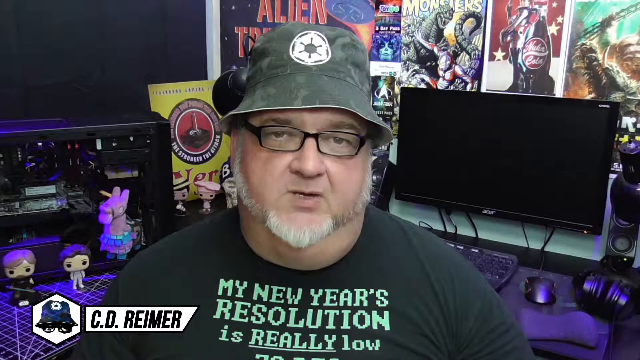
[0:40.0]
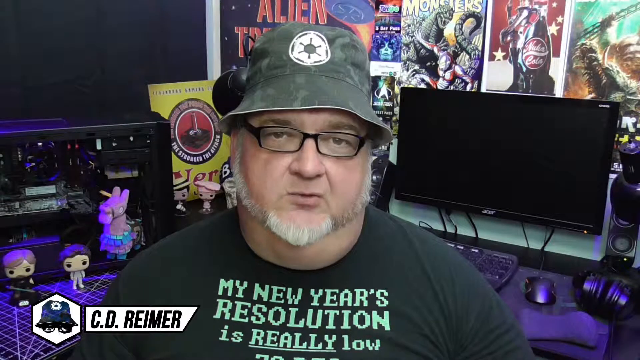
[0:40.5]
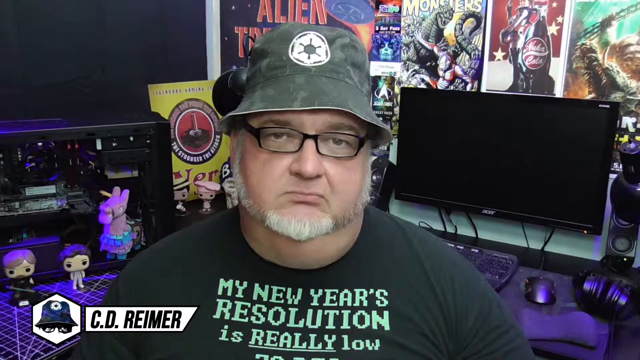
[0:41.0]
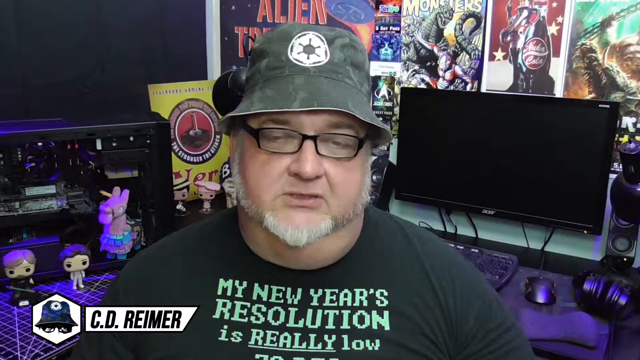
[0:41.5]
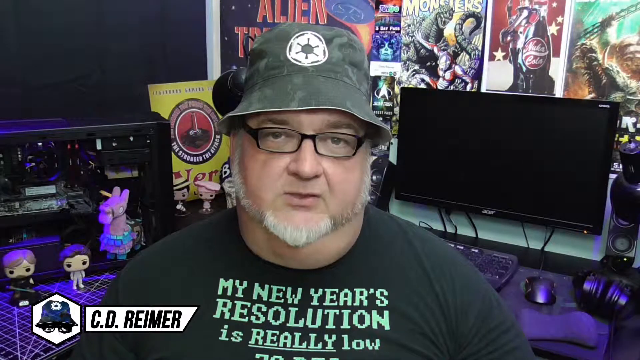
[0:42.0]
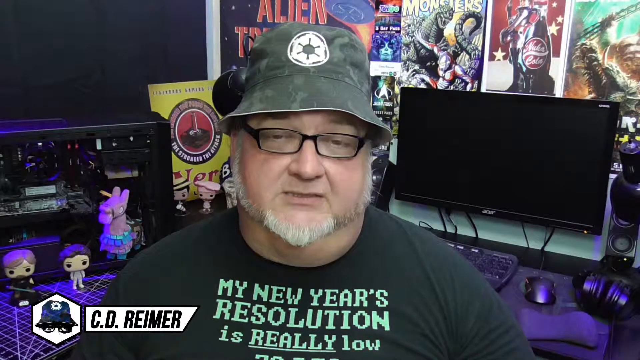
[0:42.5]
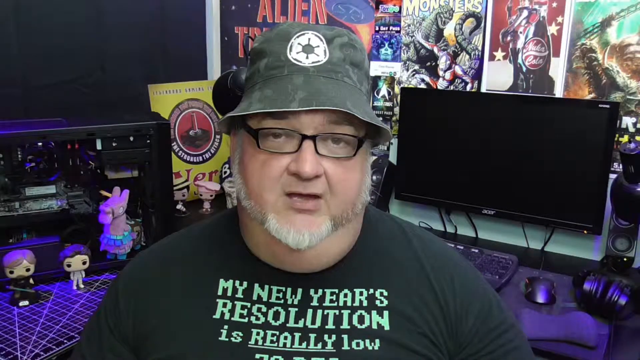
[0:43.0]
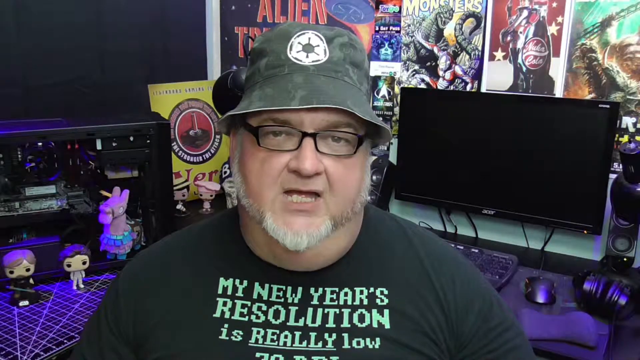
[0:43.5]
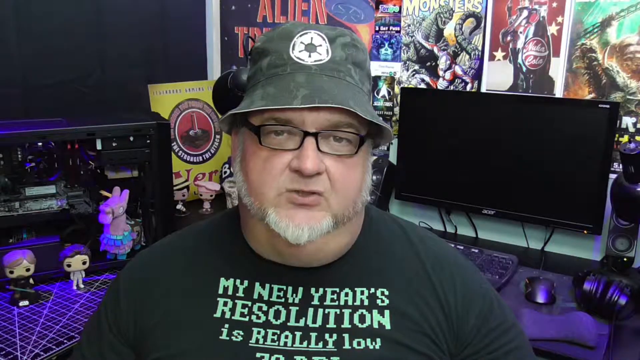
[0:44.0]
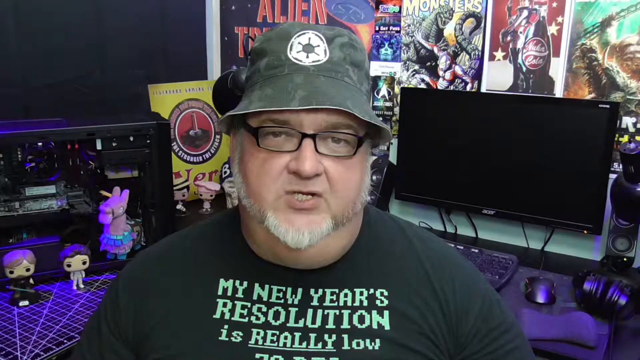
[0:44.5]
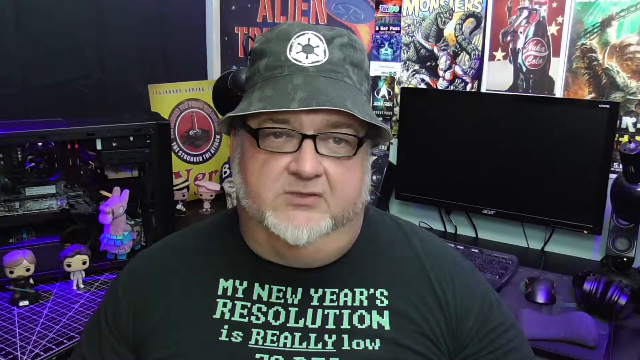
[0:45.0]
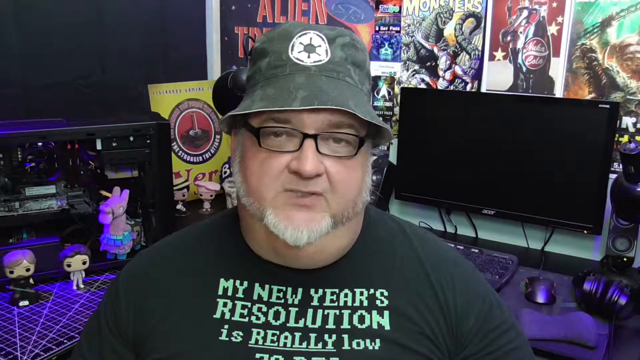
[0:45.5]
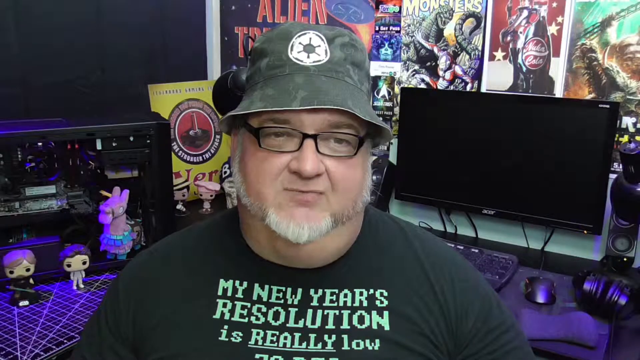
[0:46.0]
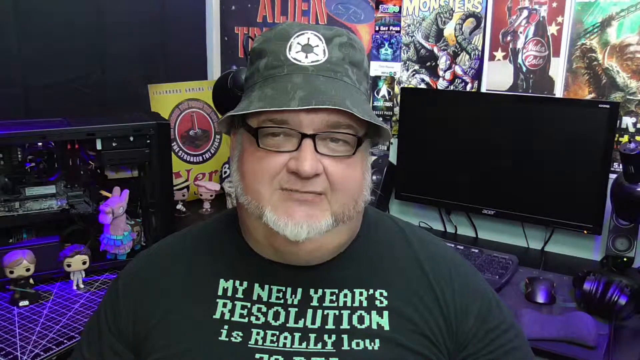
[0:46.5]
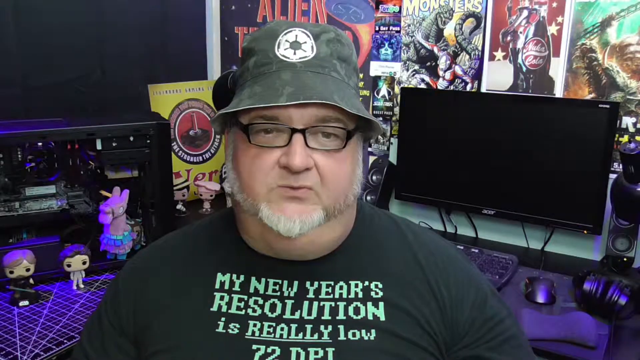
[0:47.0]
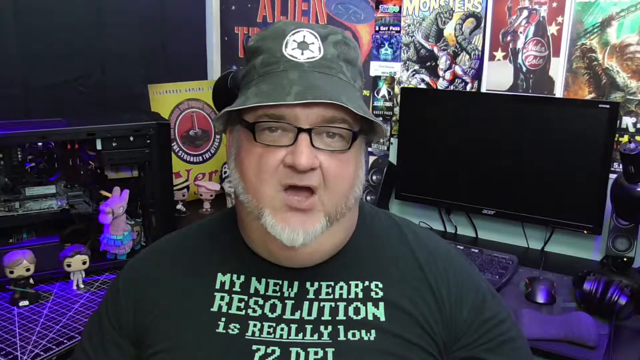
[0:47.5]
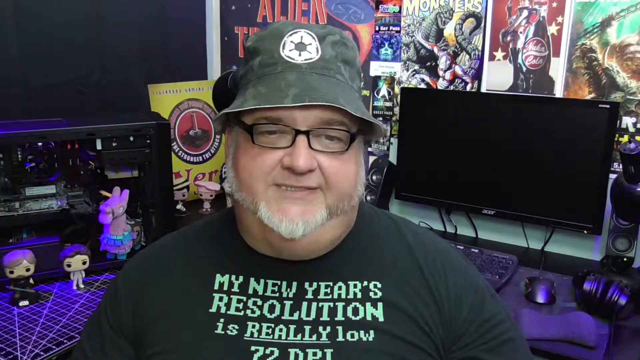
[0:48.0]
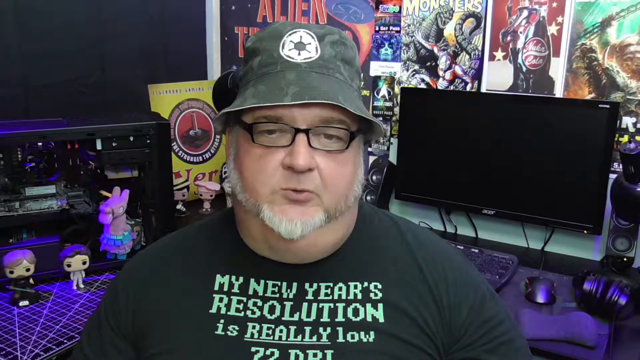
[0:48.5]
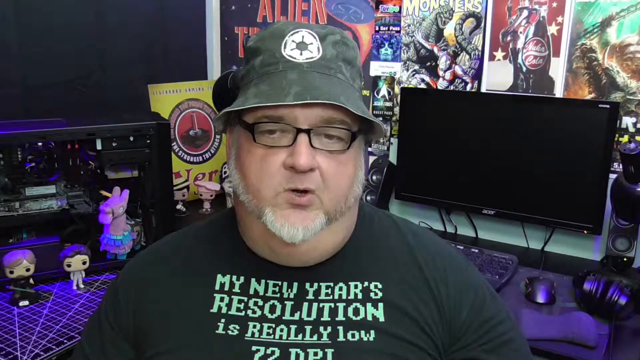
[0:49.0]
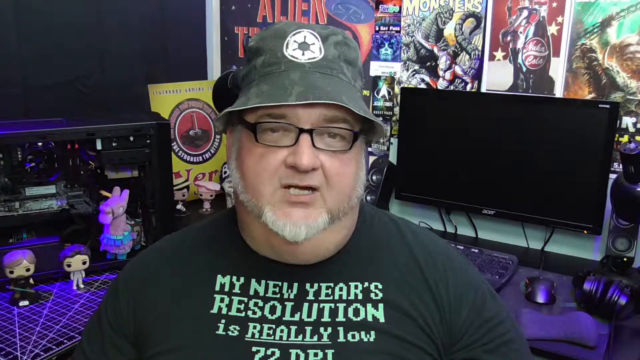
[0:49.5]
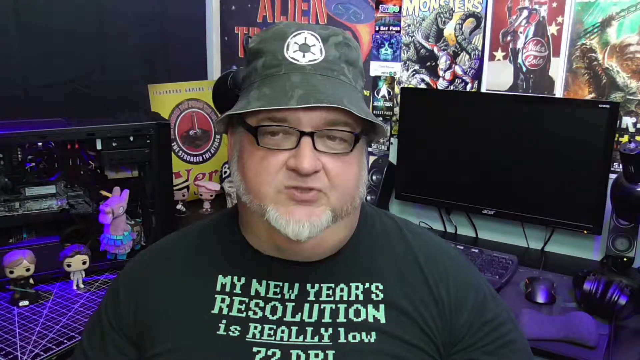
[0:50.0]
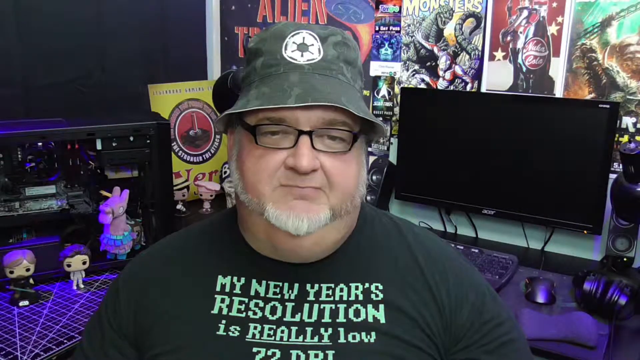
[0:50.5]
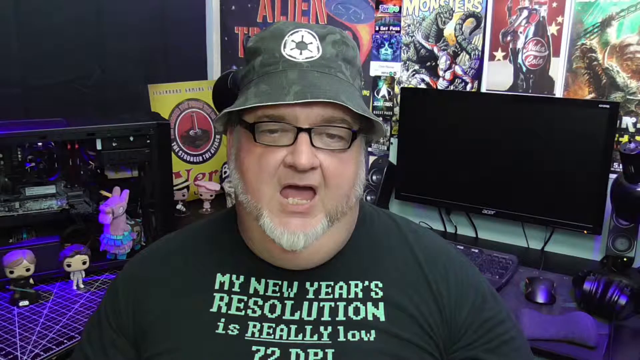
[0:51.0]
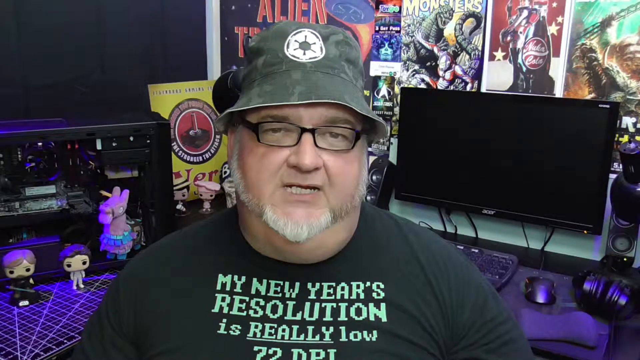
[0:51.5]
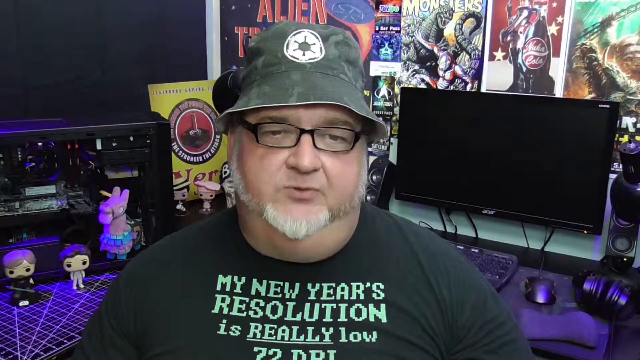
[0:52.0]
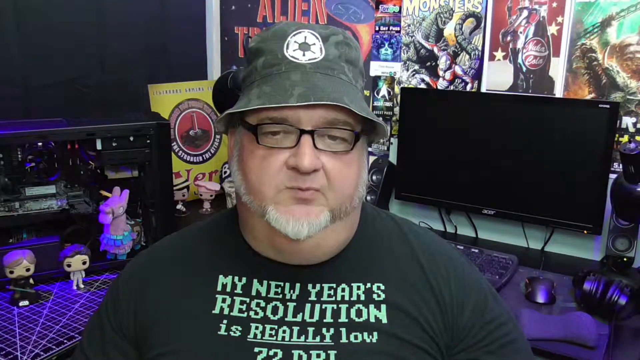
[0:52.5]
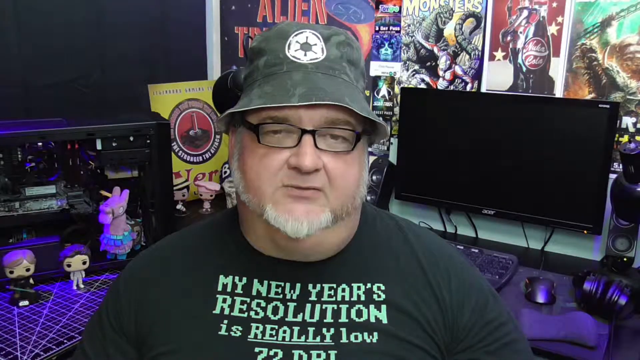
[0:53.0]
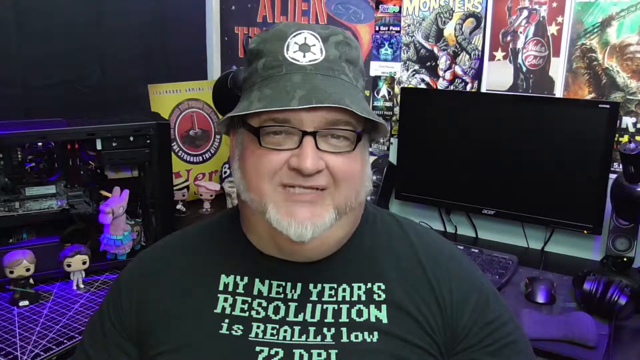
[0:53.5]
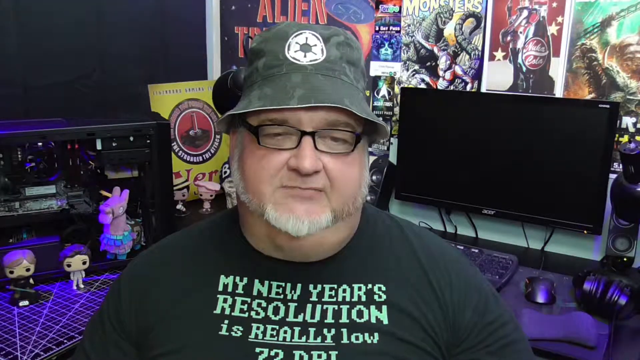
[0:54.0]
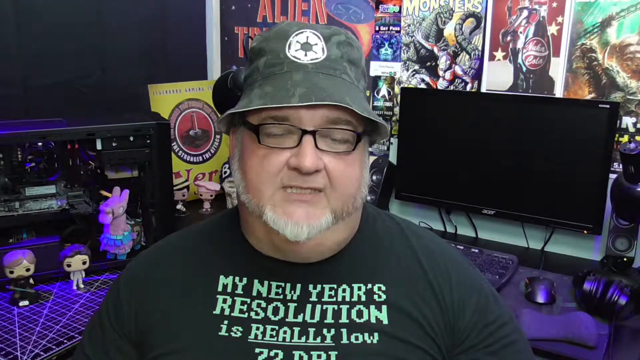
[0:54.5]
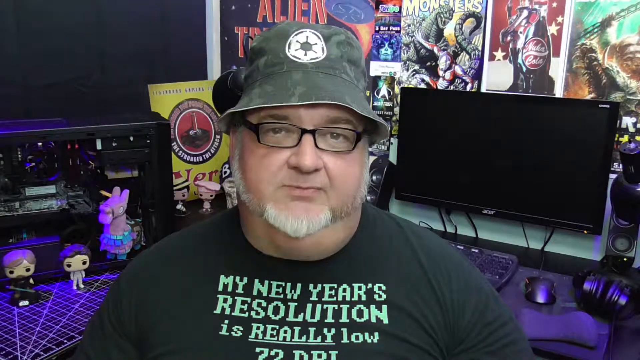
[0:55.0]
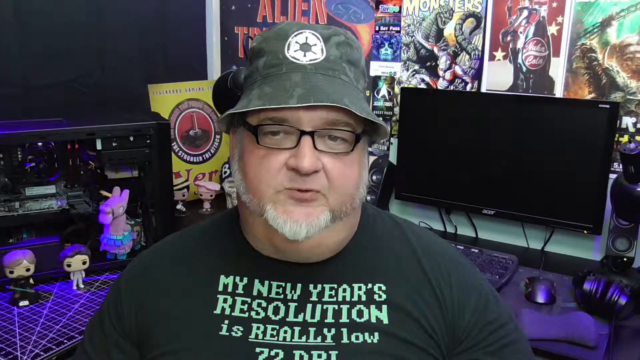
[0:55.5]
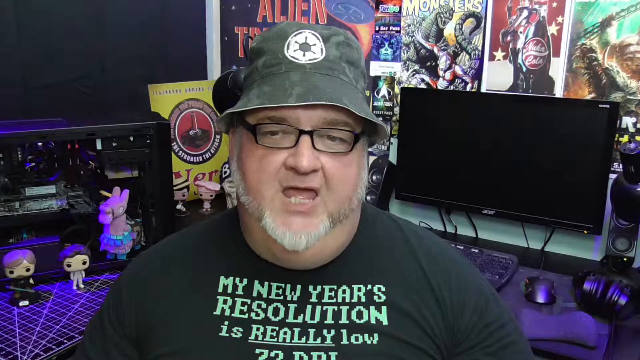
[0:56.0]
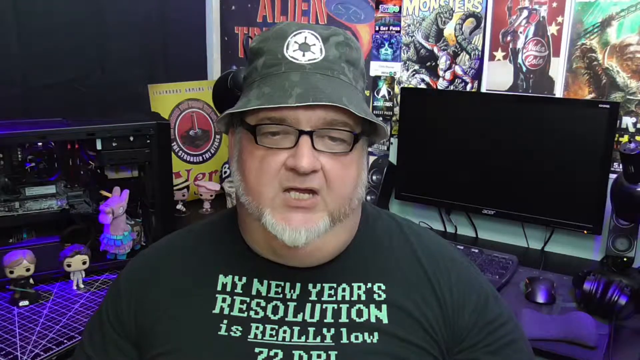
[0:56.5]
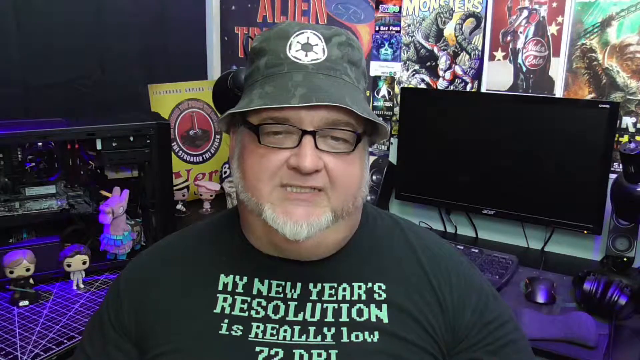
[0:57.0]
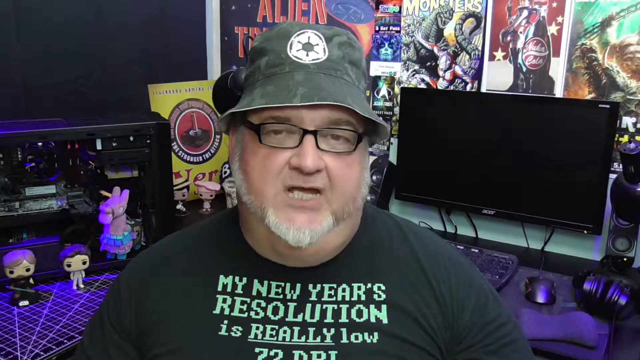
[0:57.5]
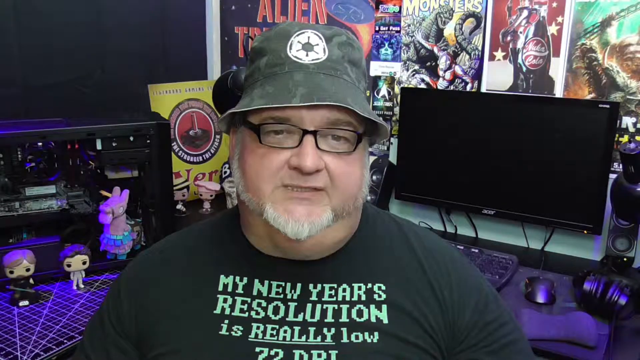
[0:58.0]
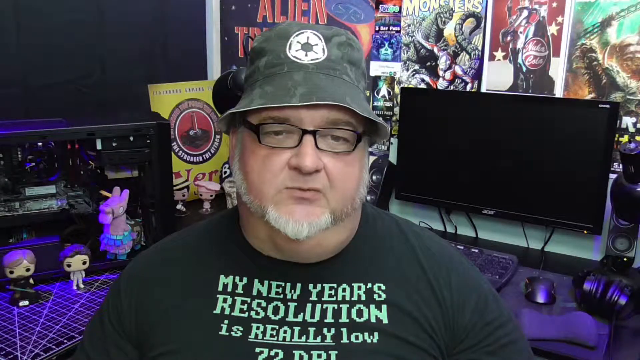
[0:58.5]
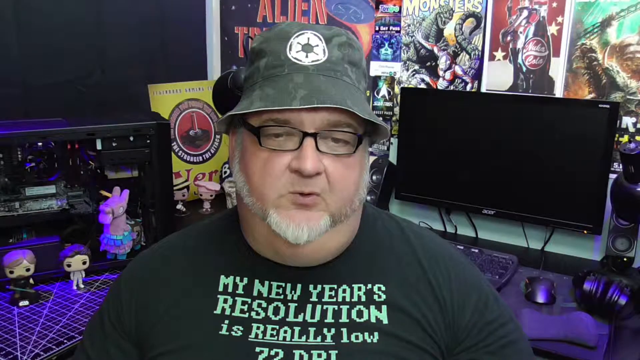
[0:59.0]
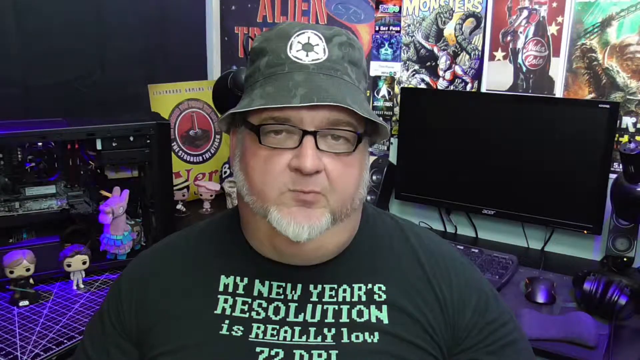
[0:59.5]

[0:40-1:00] The man continues speaking to the camera with some eyebrow movement. His eyes seem to wander in a way that looks like reading, giving the impression that he is talking from a script. Behind him are two typical gamer speakers, one to the left and one to the right of his monitor. A headset is lying on the black desk next to his mouse, and below there also seems to be one of those quite big mouse pads that goes under the keyboard as well. Everything behind him seems to be turned off. The poster on the wall right behind his head seems to have the word "alien" right above his head, but the bucket hat cuts off what it says below, so the poster can't really be seen.